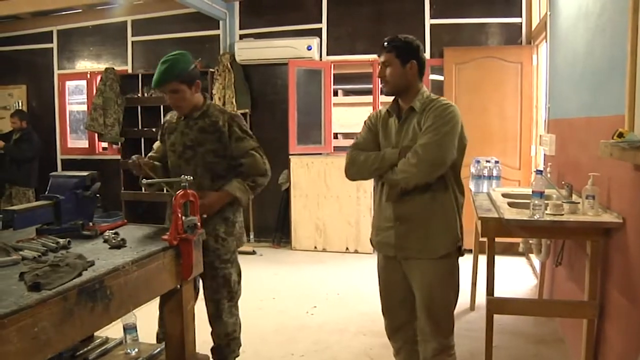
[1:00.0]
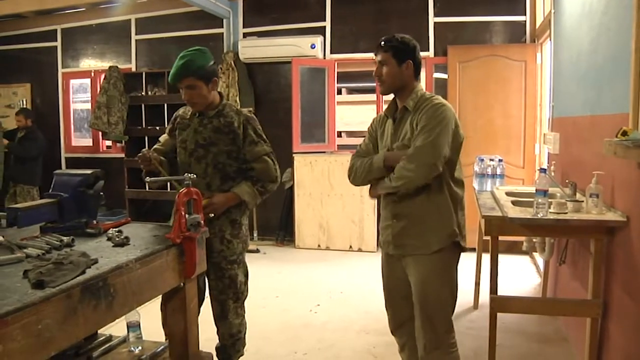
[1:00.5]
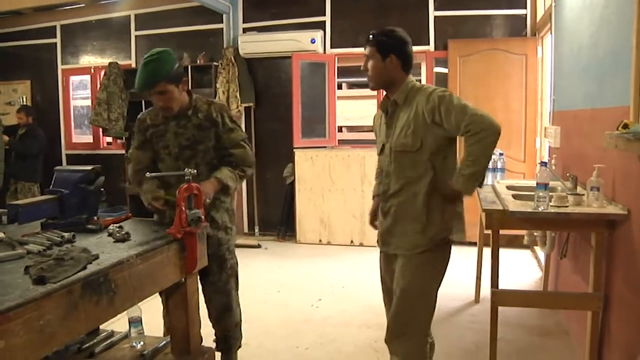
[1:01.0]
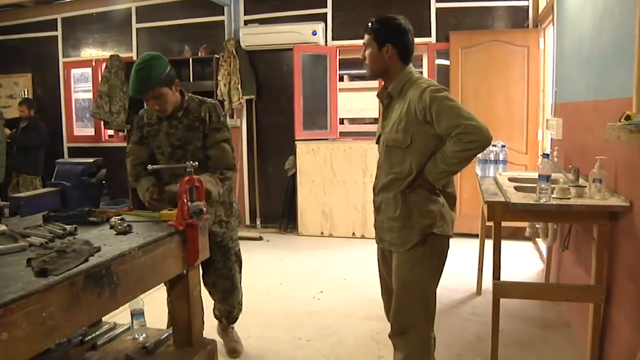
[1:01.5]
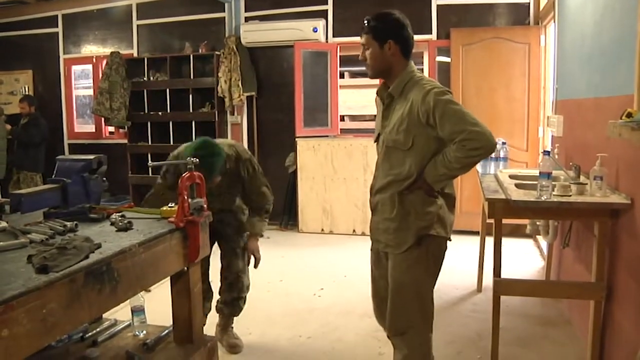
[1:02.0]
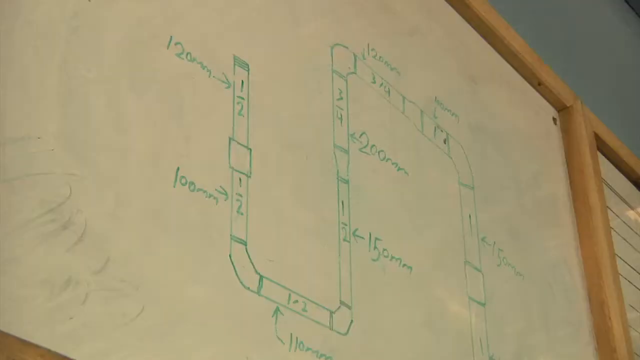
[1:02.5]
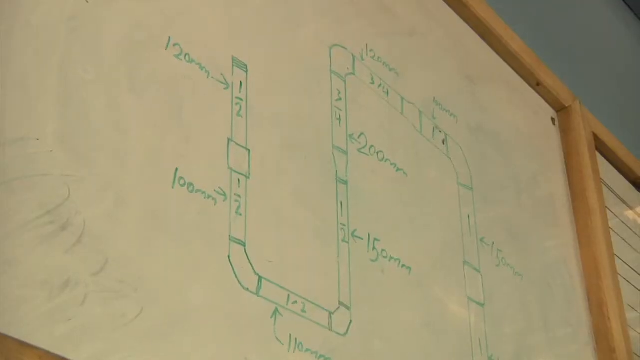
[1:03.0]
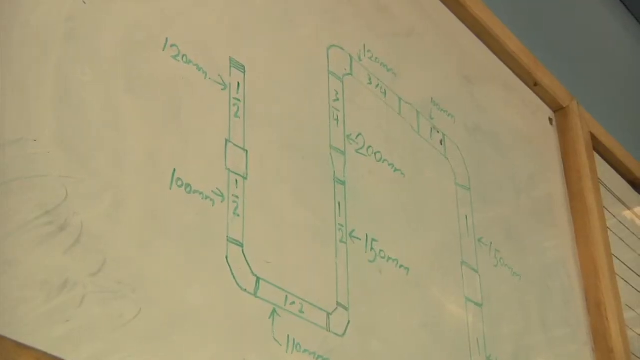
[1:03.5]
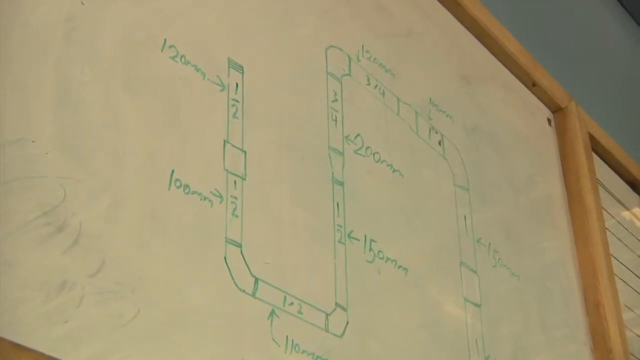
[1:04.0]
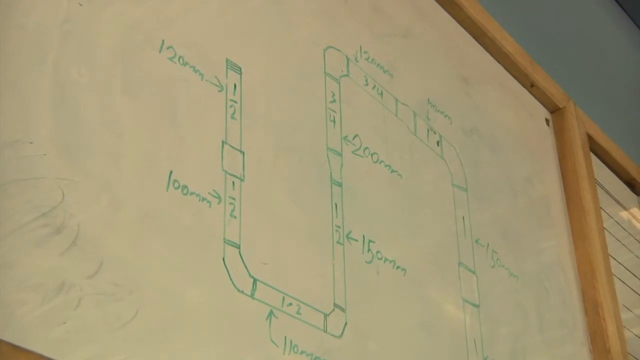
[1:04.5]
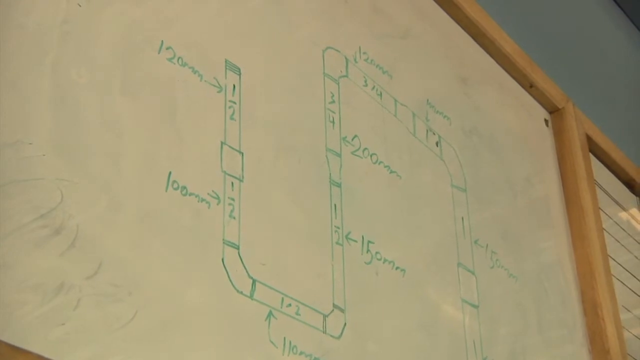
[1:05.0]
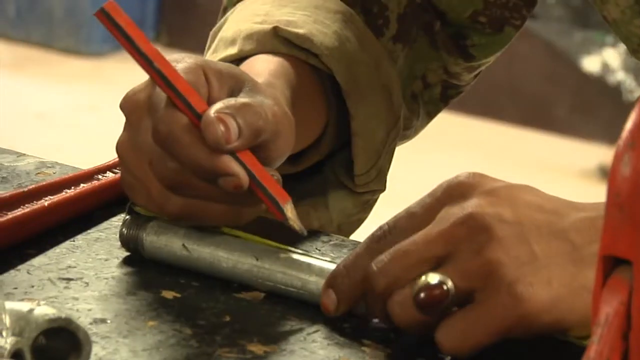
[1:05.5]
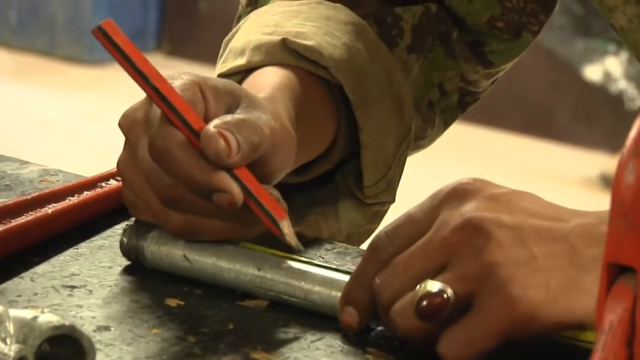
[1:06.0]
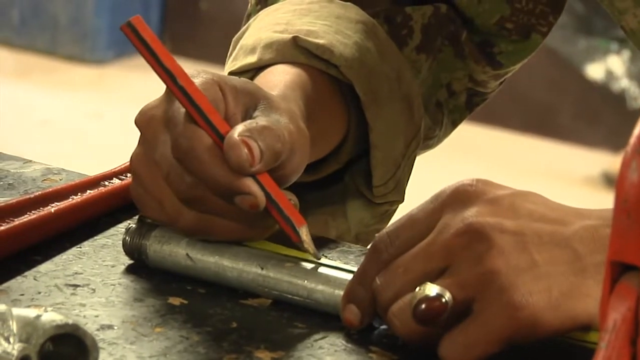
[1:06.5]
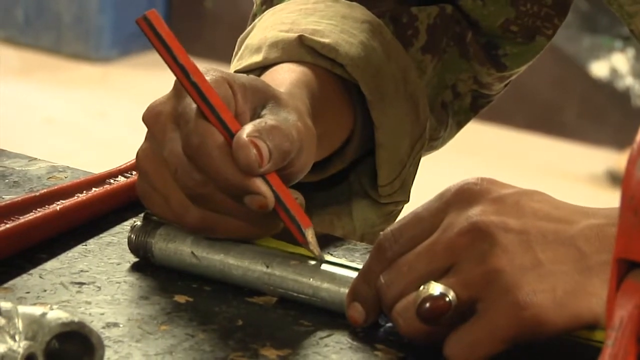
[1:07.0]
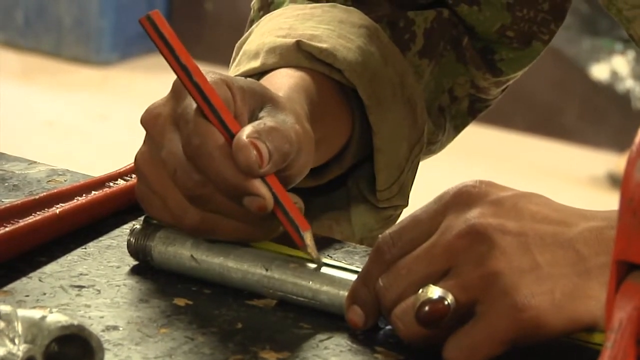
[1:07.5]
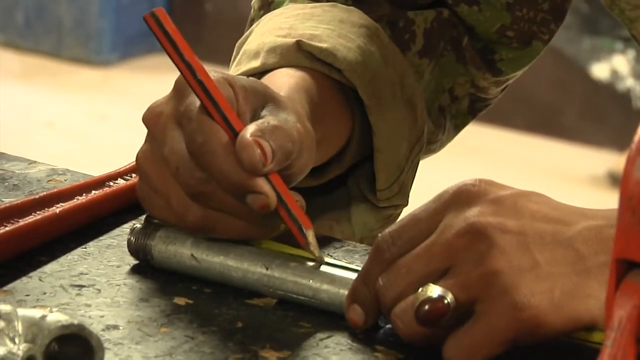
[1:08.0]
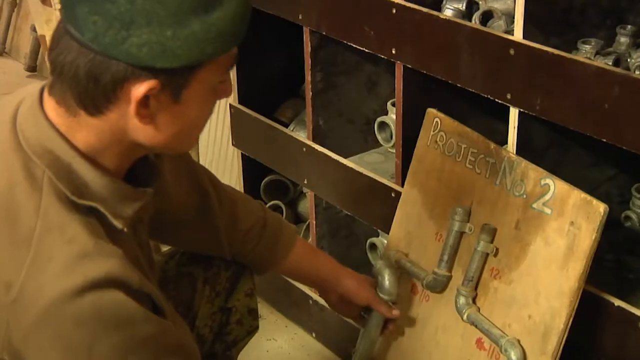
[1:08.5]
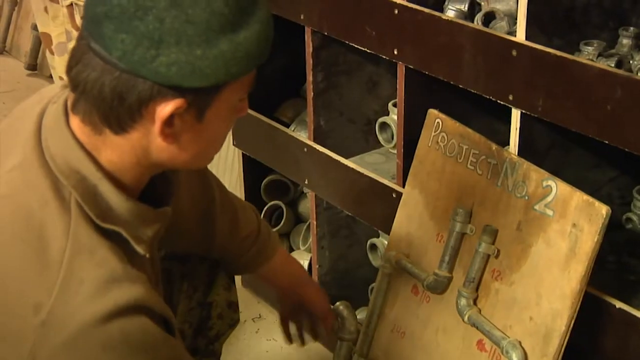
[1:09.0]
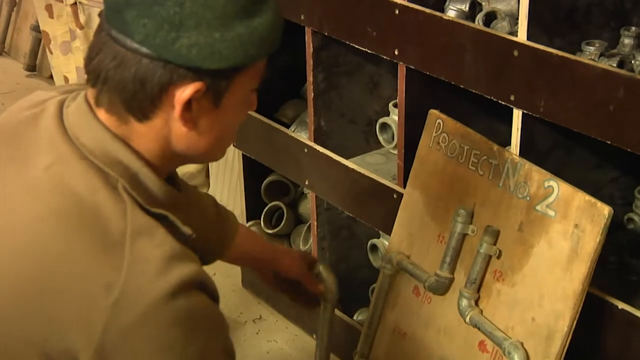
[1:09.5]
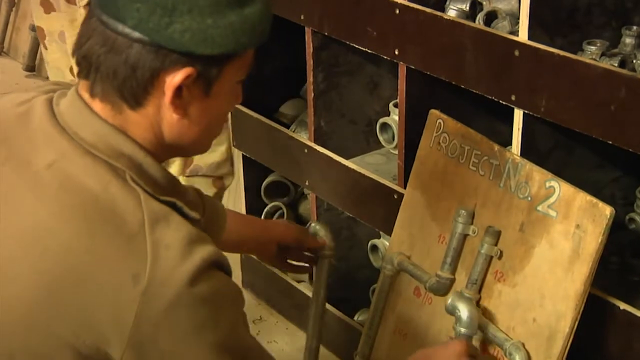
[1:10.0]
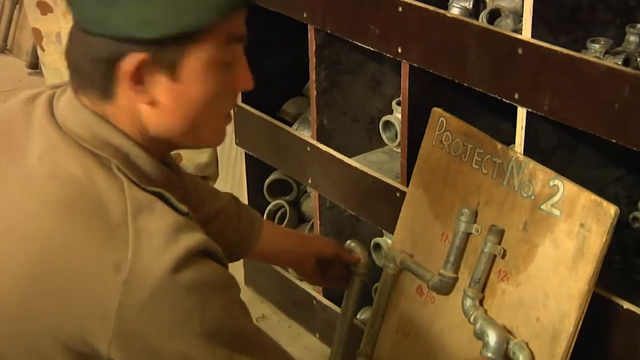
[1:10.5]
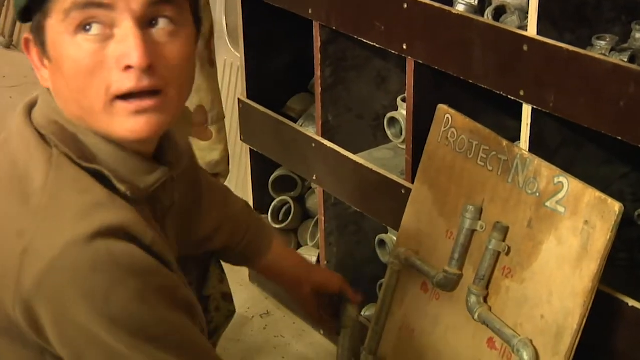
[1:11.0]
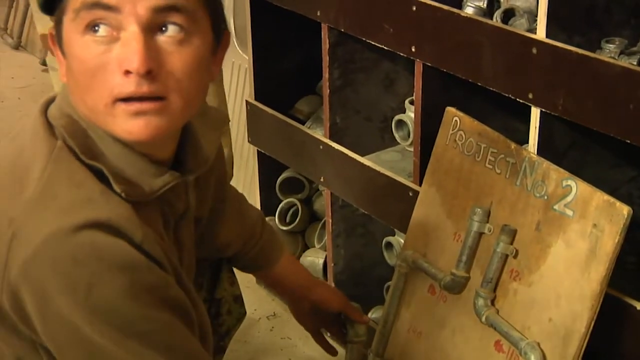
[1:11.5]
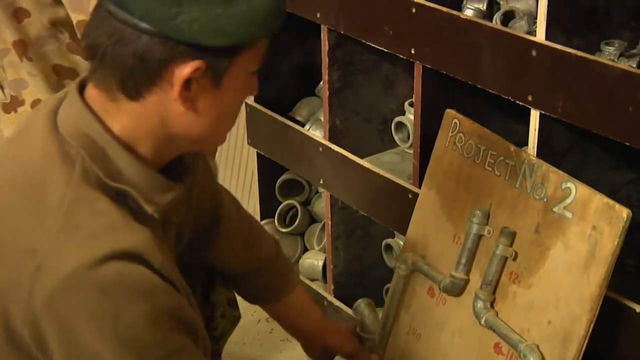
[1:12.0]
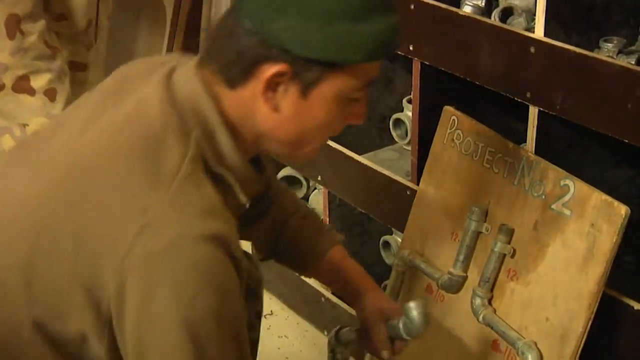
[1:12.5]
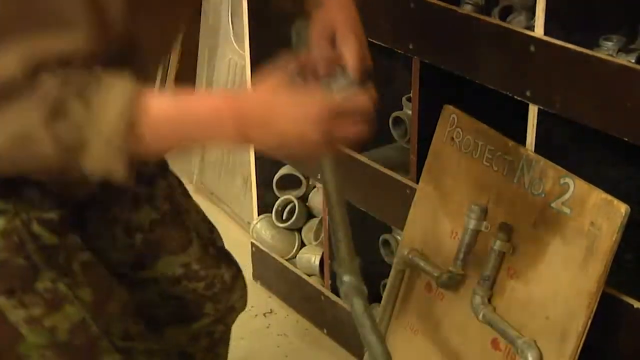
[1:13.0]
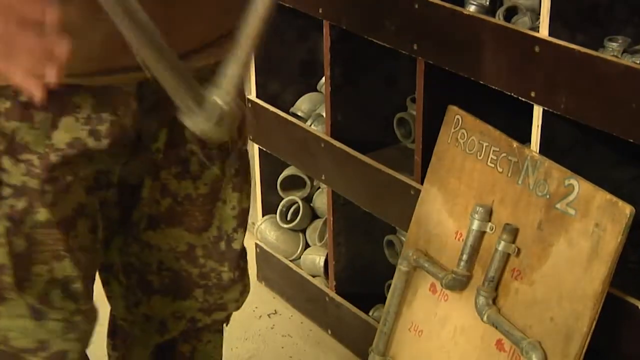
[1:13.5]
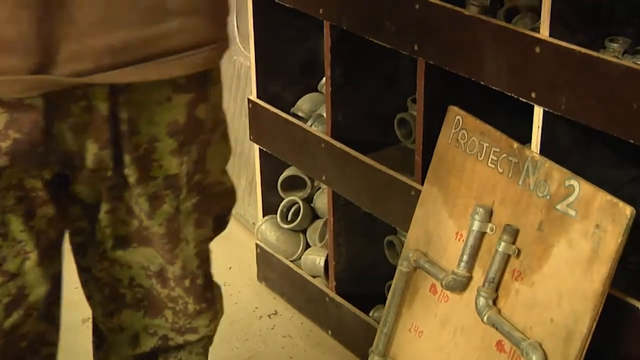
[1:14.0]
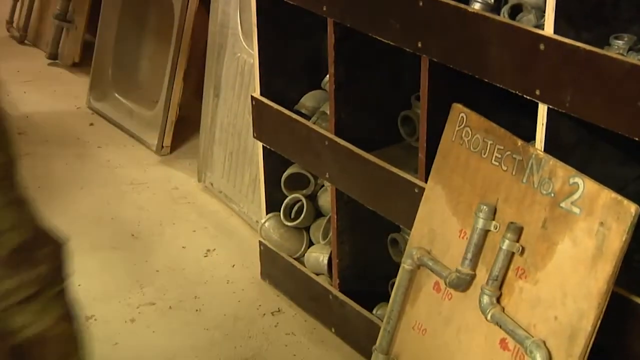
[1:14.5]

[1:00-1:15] Two men are in focus in some kind of workshop. The man on the left wears a green camouflage uniform with his sleeves rolled up to mid-arm and uses a wrench to turn something attached with a red metal clamp to a workbench. Standing to his right is a man in a long-sleeved tan military uniform with sunglasses pulled up on top of his head, apparently supervising. The man with the wrench then pulls out a ruler, pulls out some of the tape, and places it on the workbench, then bends down to grab something off the ground. The video cuts to a diagram of a plumbing assembly, essentially blueprints for the piping, with various measurements pointing to sections of the pipes. Next is a close-up of someone using a large pencil to mark a cut mark on a metal pipe. Finally, a different man pulls out various pipes and compares their sizing to a wooden board holding a pre-assembled guide pipe assembly.